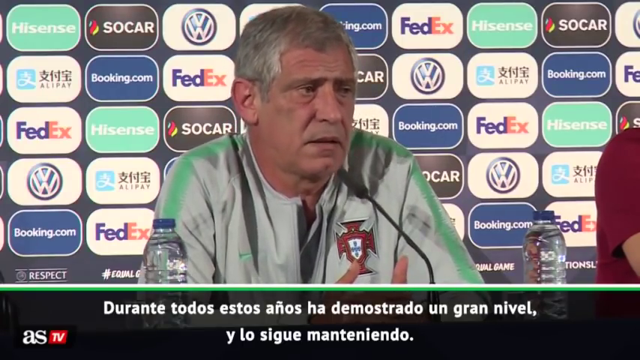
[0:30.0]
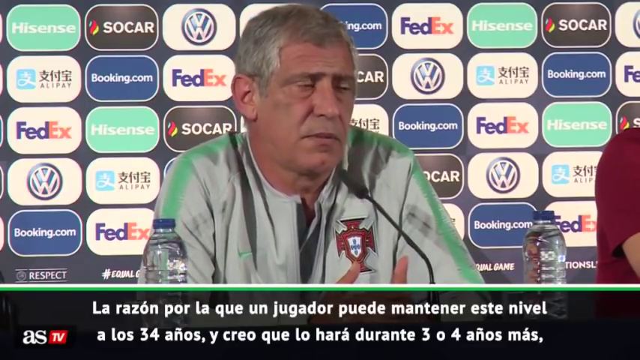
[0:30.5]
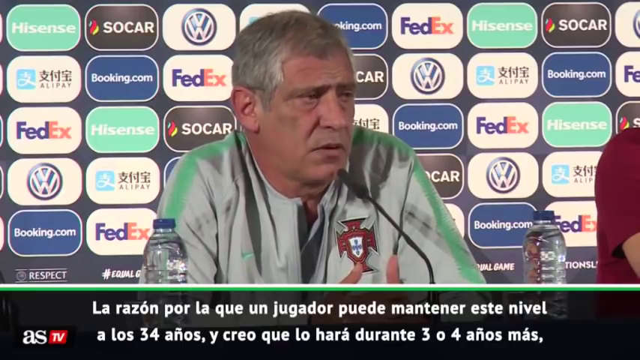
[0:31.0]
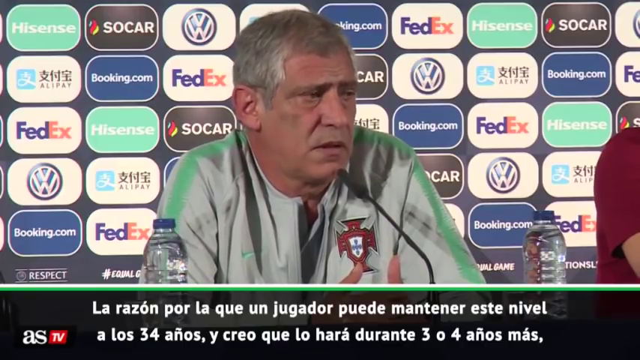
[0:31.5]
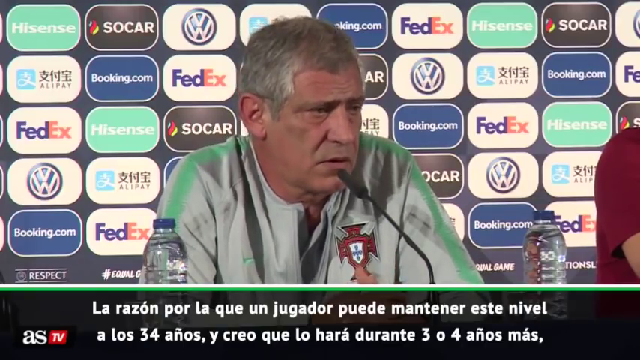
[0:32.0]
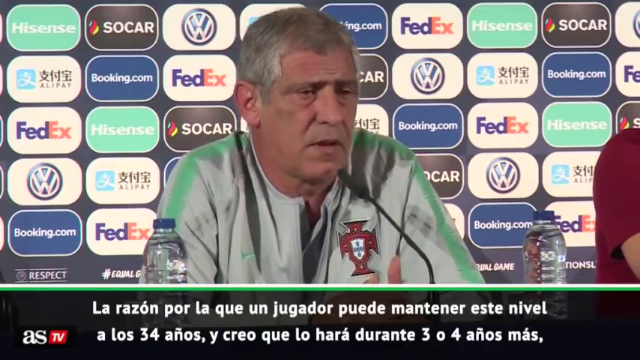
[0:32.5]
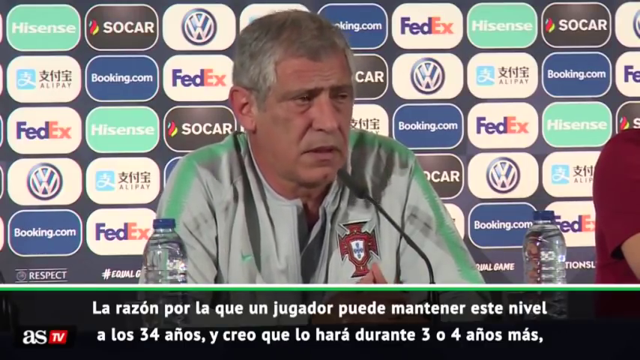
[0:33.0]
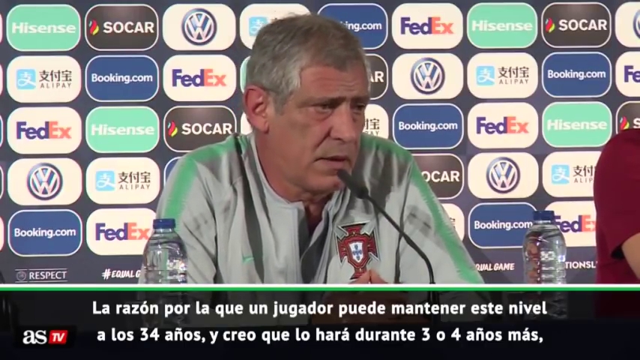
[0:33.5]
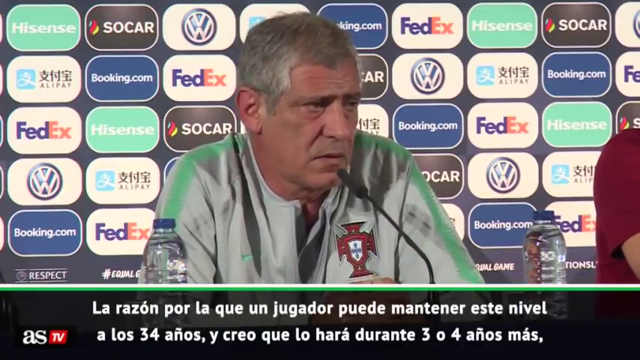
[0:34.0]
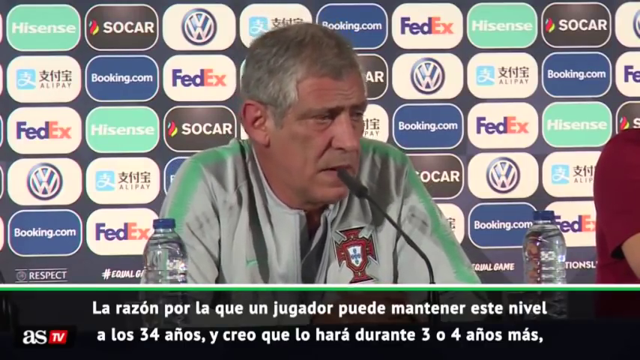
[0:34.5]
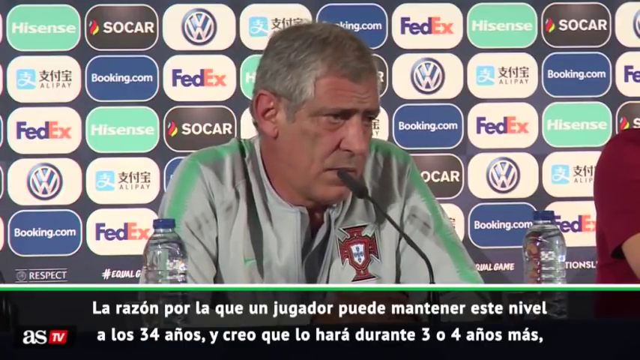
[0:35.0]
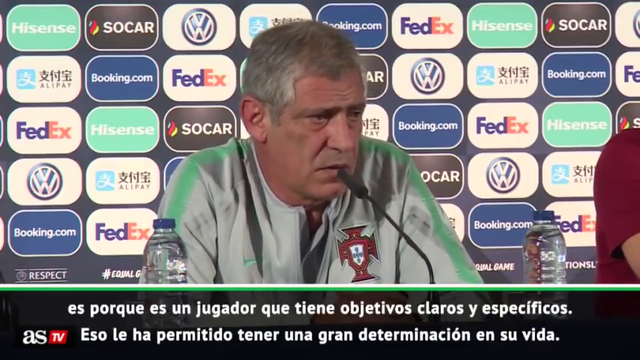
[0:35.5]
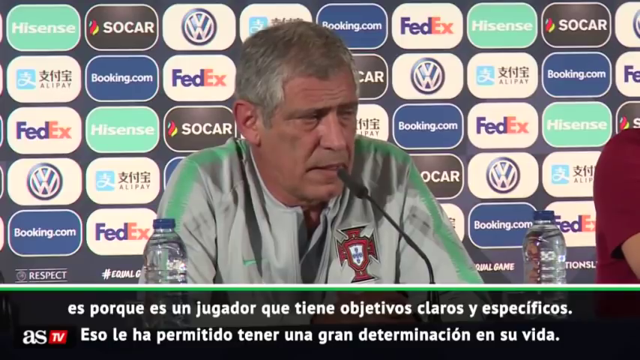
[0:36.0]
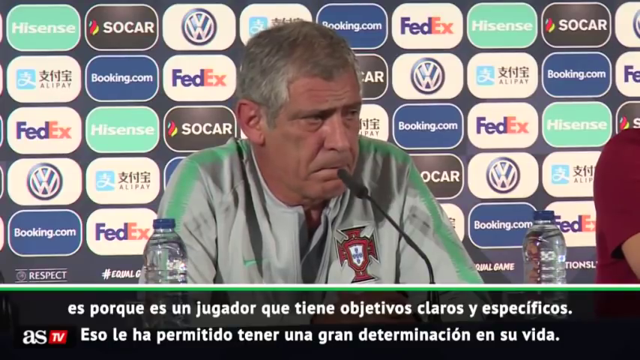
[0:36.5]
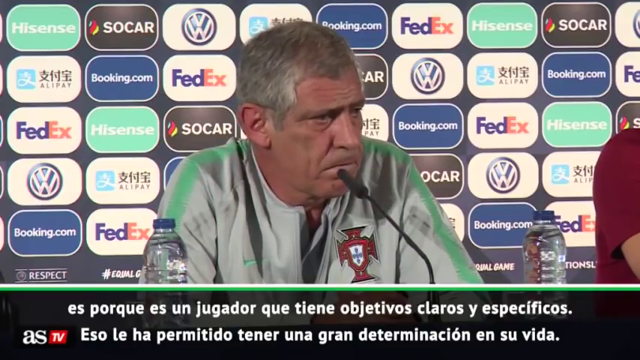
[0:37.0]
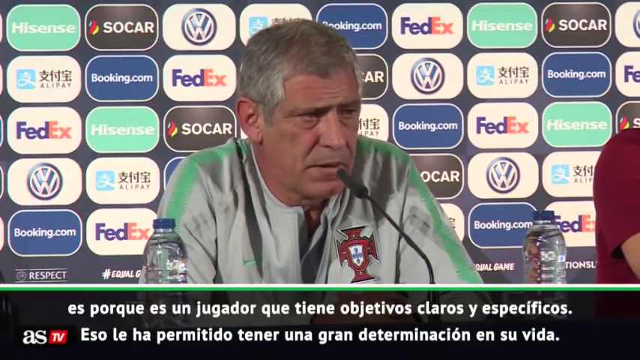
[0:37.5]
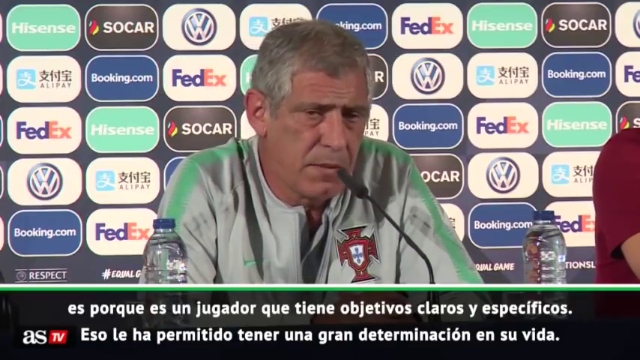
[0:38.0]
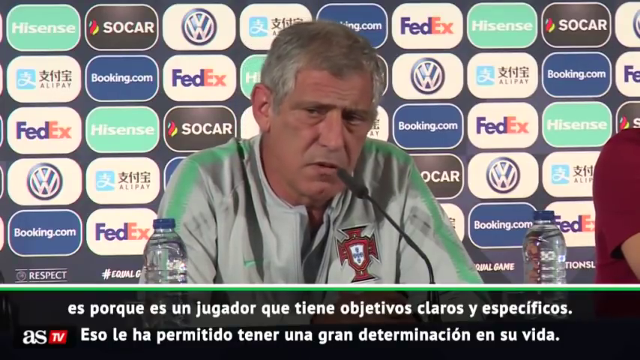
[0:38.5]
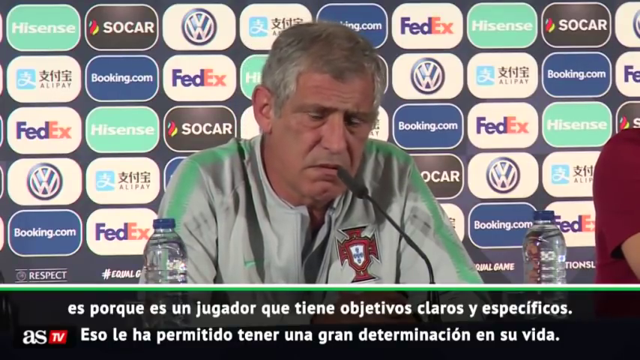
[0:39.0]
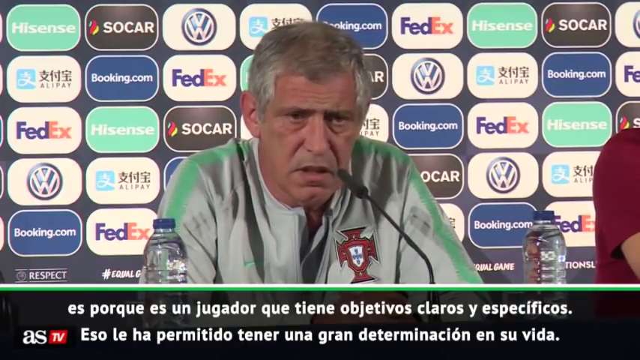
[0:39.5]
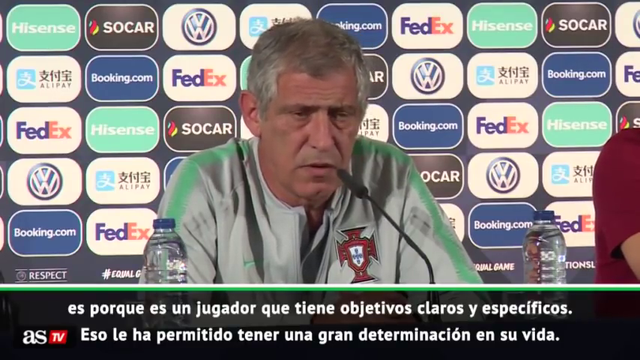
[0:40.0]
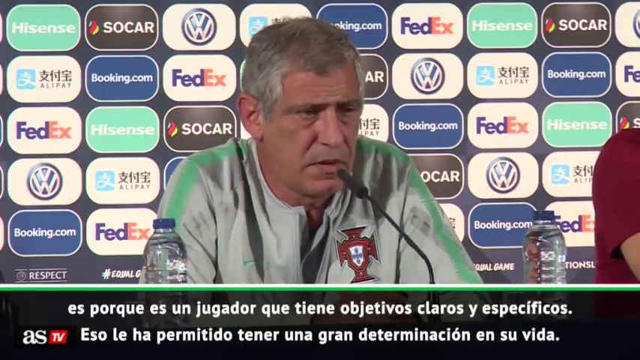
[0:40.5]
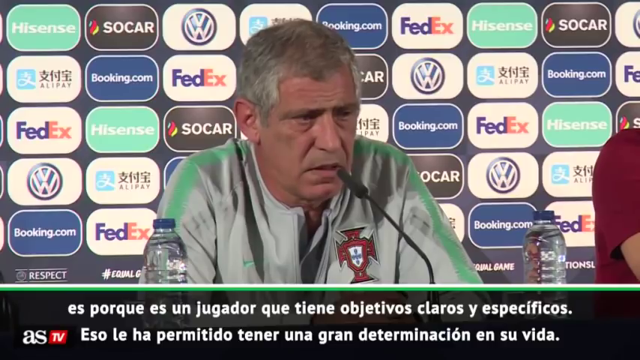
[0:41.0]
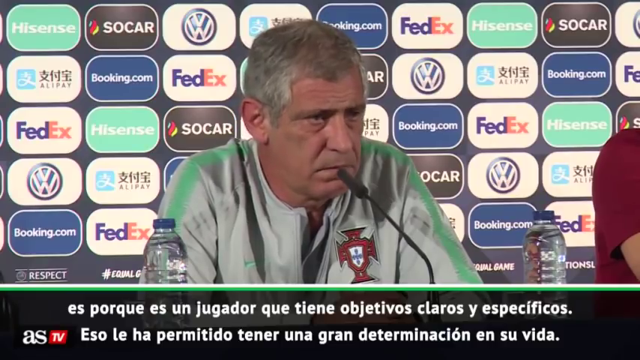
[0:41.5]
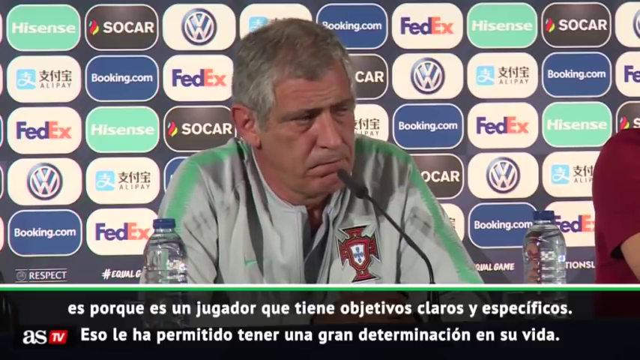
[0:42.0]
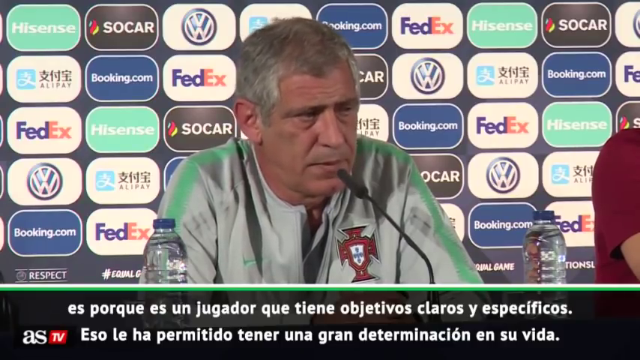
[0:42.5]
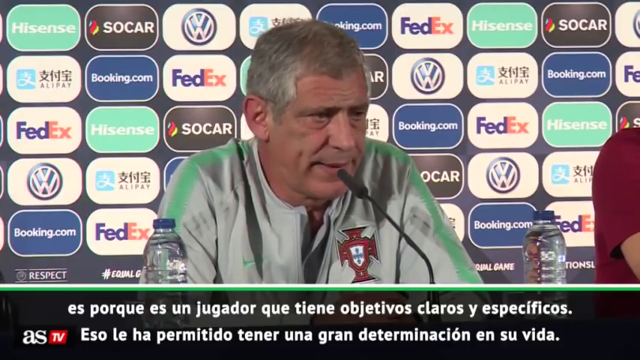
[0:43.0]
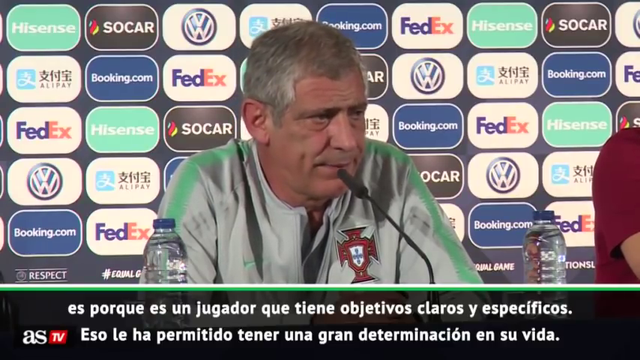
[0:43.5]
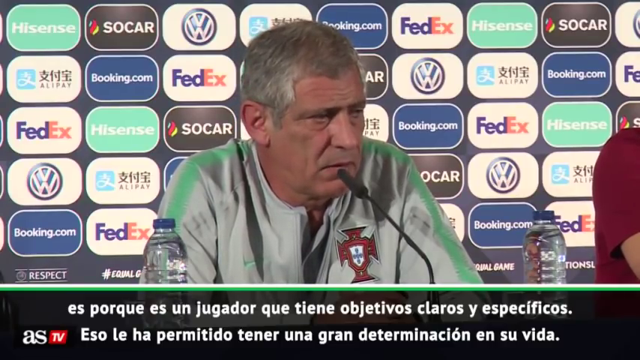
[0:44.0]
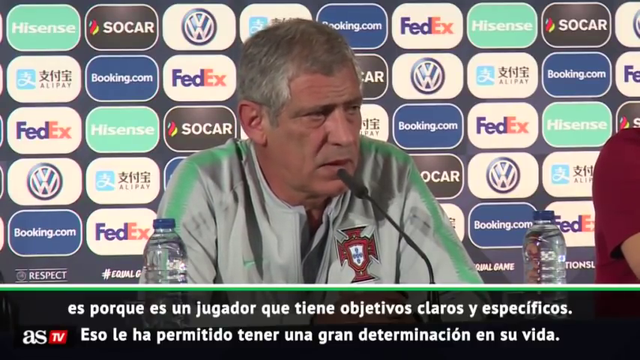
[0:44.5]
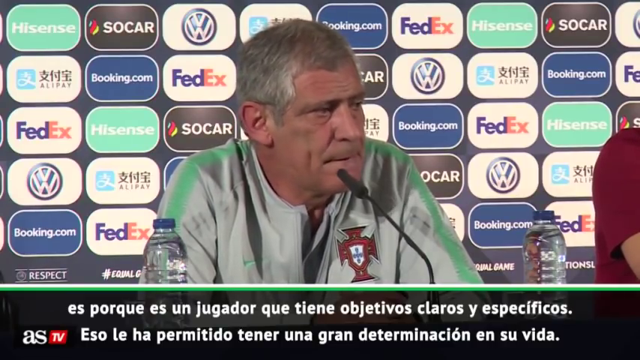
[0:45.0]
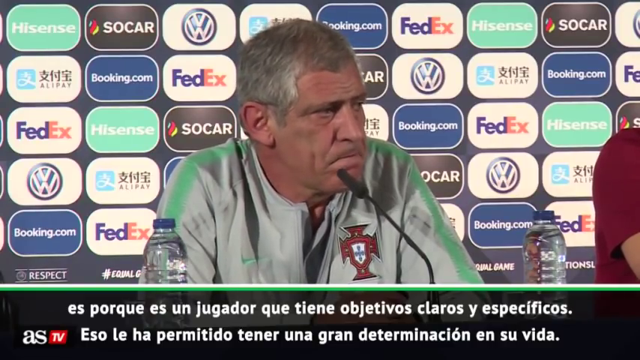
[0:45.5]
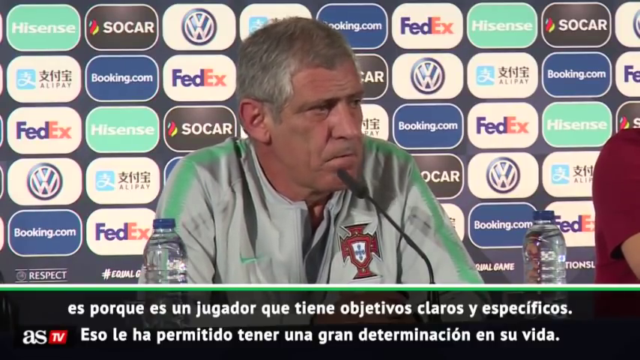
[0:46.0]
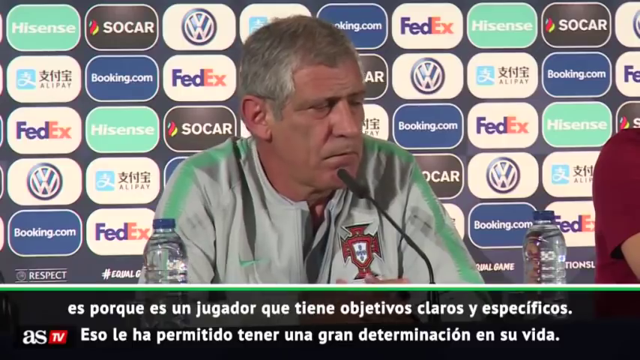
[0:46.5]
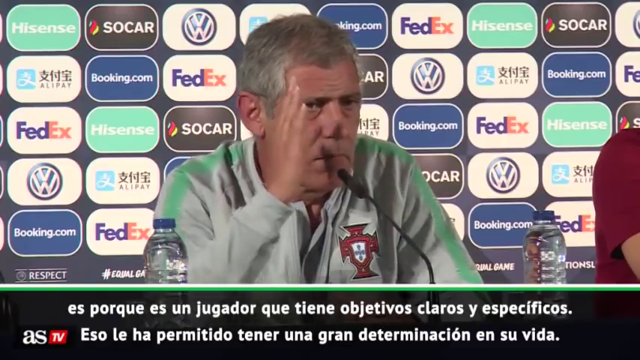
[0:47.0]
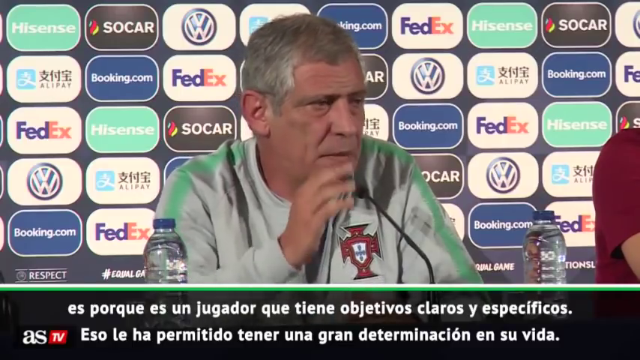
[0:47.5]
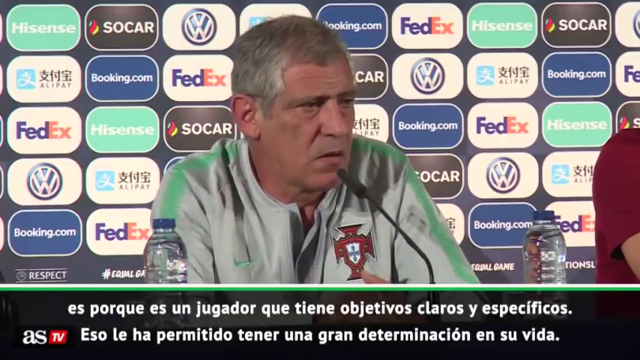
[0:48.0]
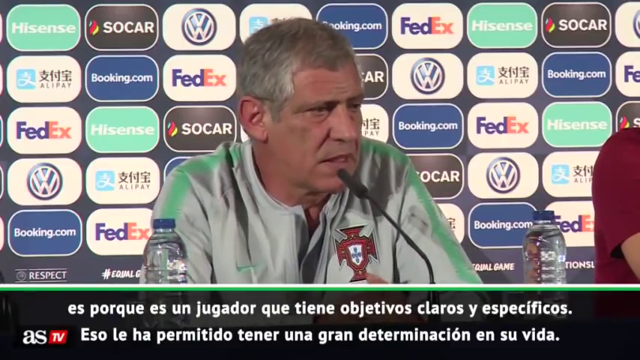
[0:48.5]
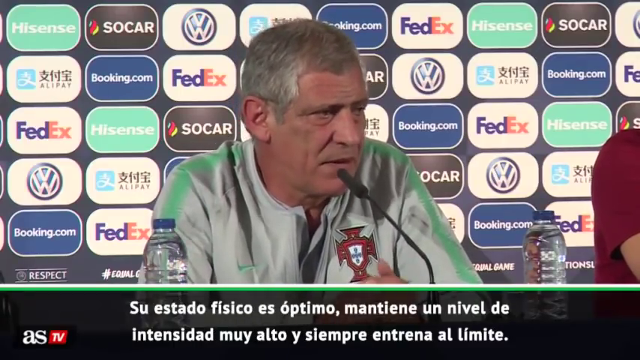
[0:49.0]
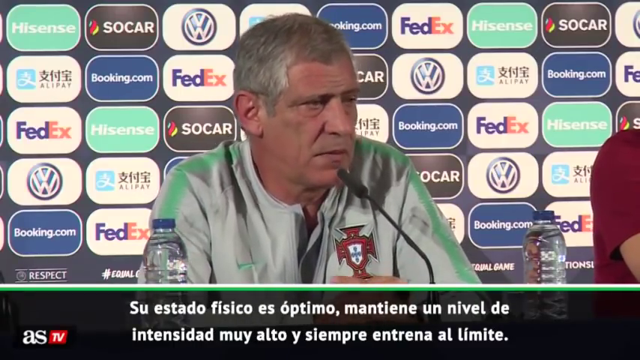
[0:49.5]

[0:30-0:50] The man sits behind the microphone in the center of the frame. On his left and his right the top half of a water bottle is visible; each bottle is full, has a blue cap and no label. Off to the far right is another person, of whom only a short-sleeved red shirt and a little of the upper arm are visible, with no head or anything else; they are seated next to the man who is speaking. It appears to be a press conference. Words in Spanish run along the bottom. The man lifts his right arm and extends his fingers near his head, as if making a line, and gestures forward. Along the bottom, his hands are kind of visible clasped together with the fingers interlaced.